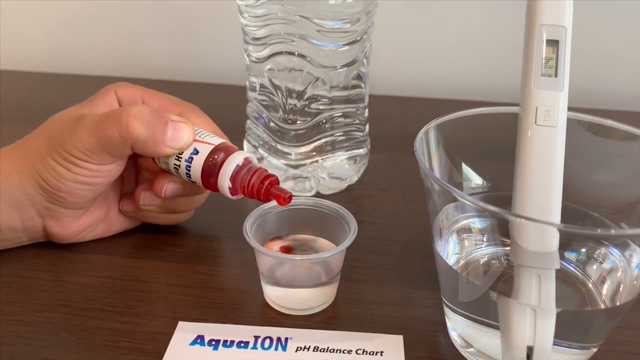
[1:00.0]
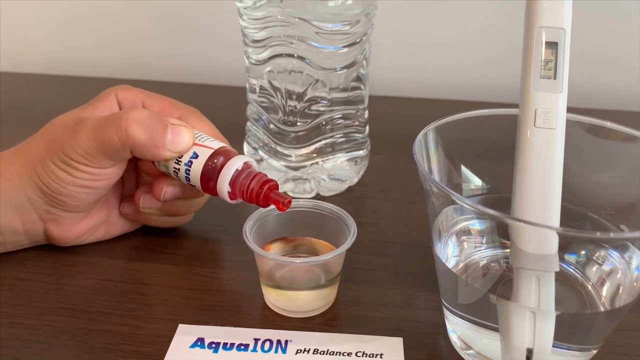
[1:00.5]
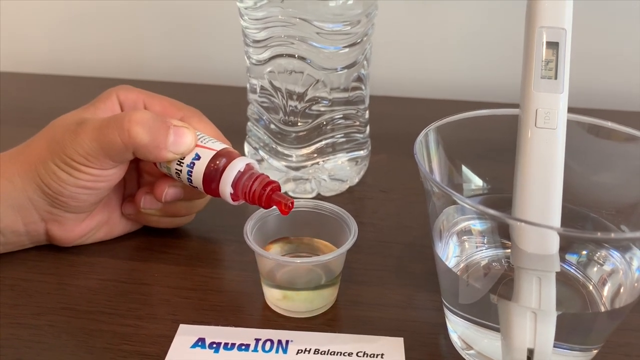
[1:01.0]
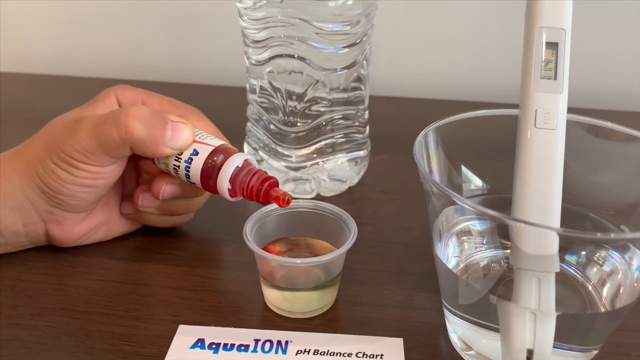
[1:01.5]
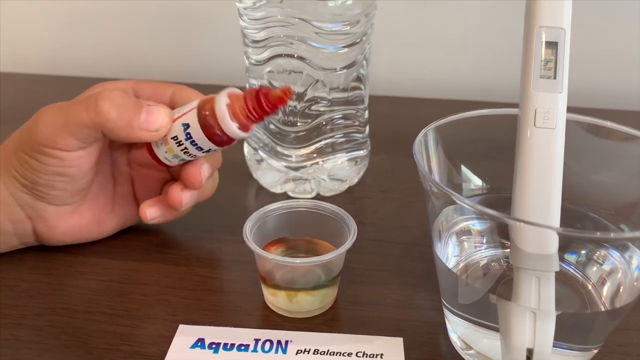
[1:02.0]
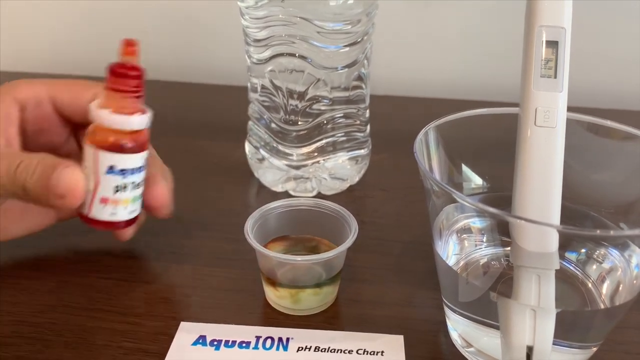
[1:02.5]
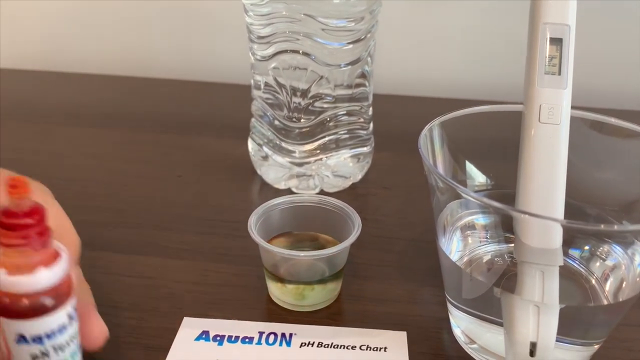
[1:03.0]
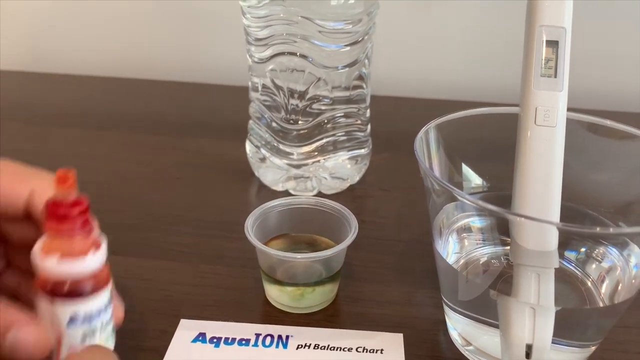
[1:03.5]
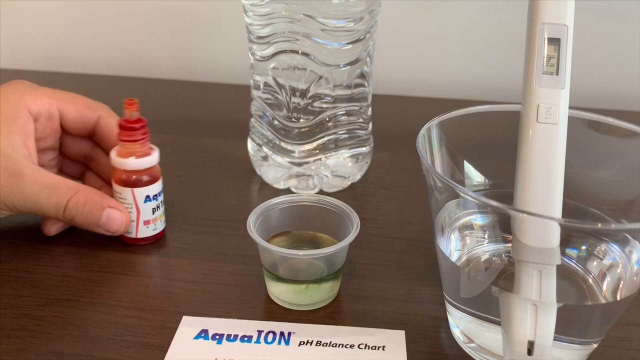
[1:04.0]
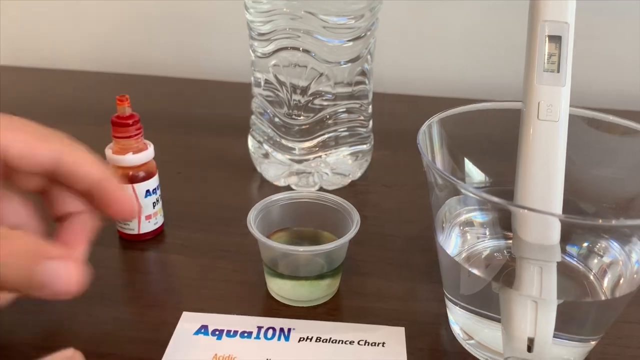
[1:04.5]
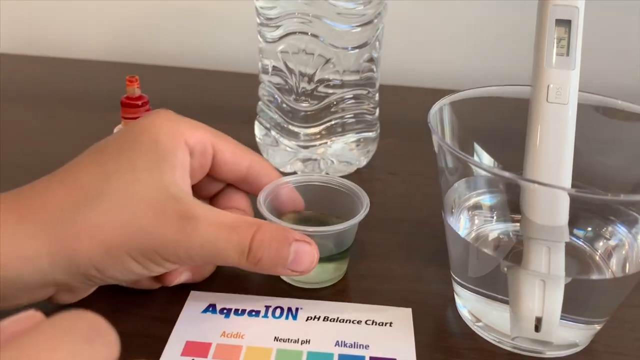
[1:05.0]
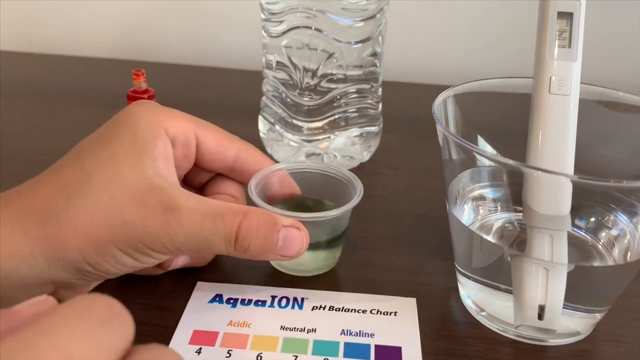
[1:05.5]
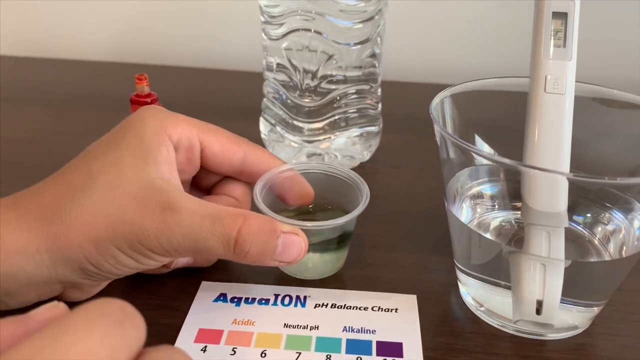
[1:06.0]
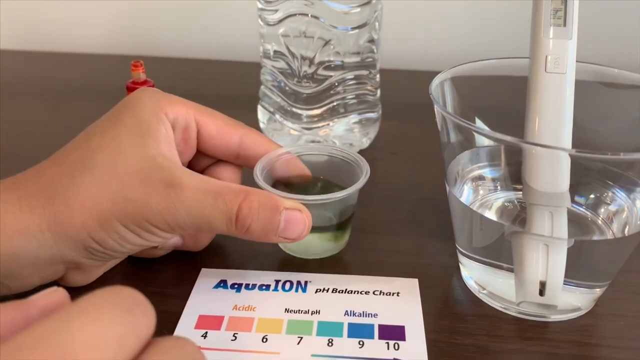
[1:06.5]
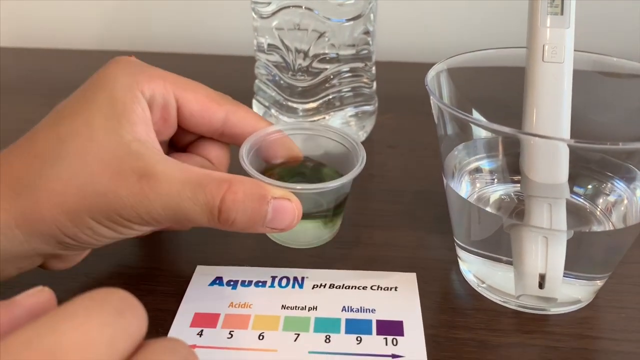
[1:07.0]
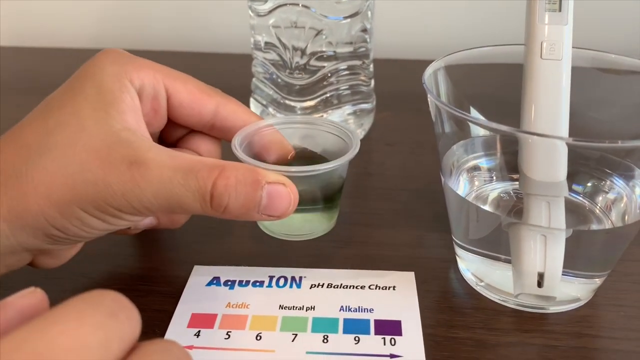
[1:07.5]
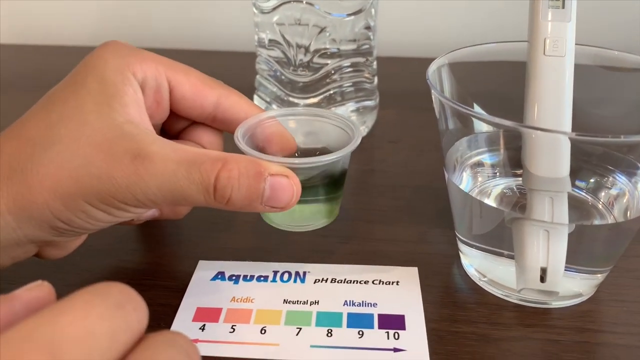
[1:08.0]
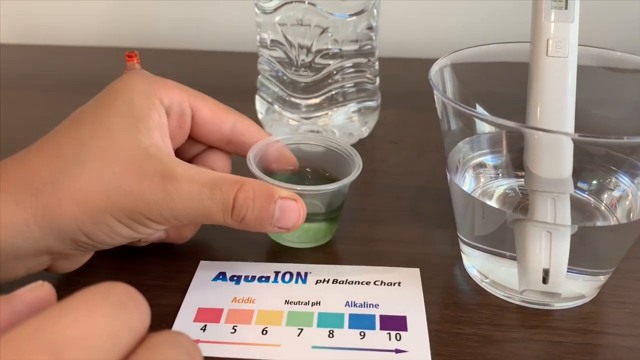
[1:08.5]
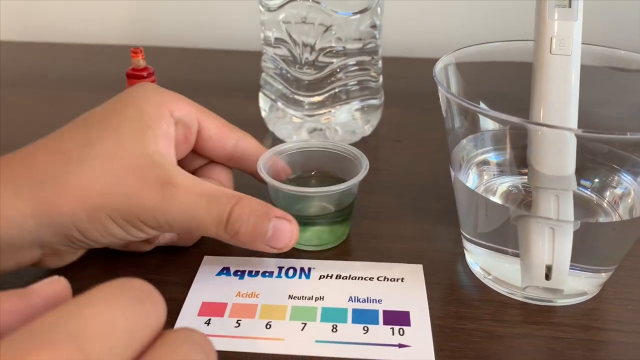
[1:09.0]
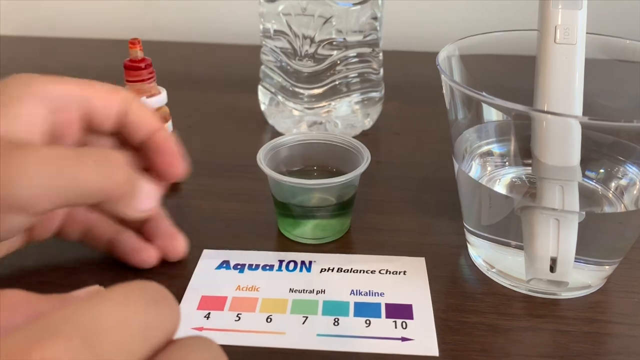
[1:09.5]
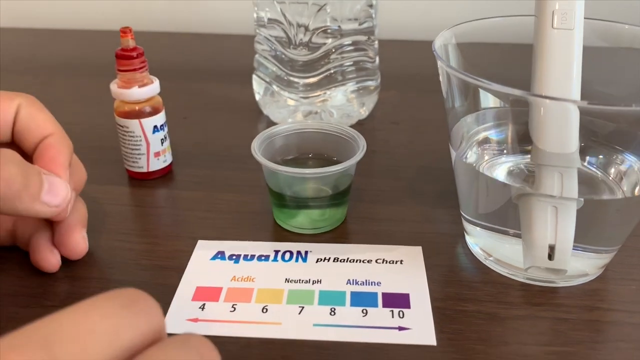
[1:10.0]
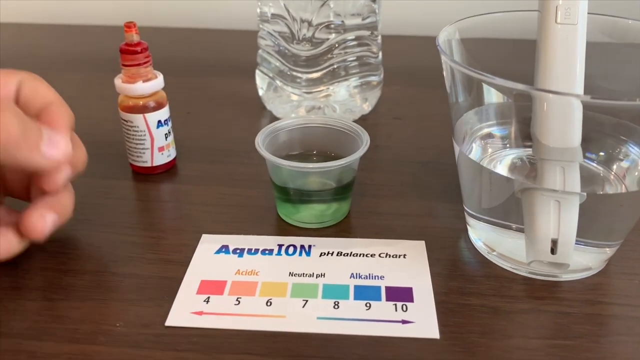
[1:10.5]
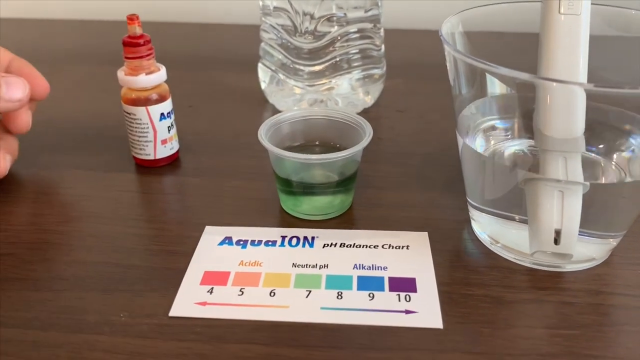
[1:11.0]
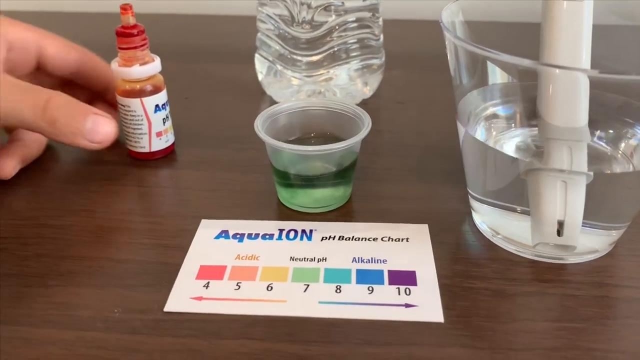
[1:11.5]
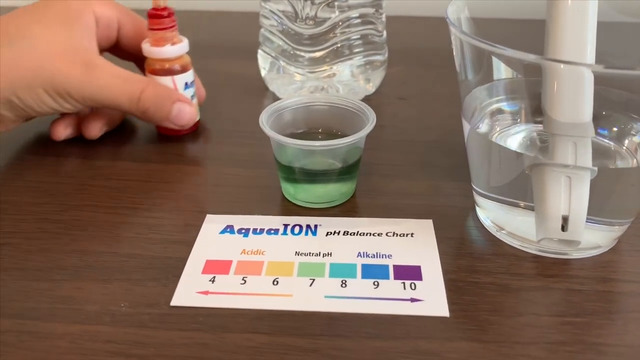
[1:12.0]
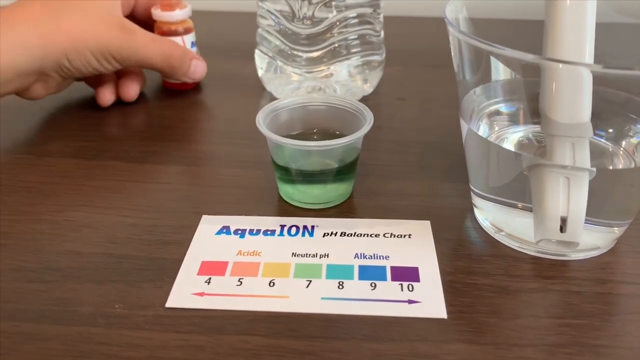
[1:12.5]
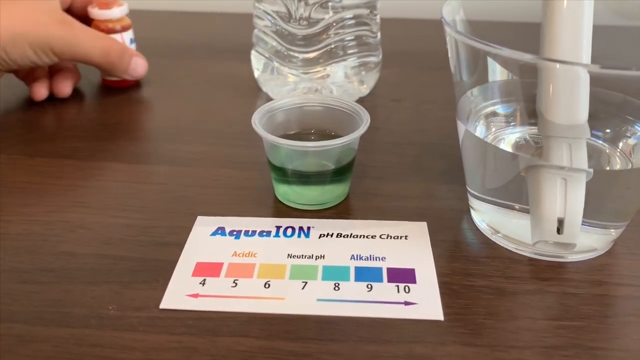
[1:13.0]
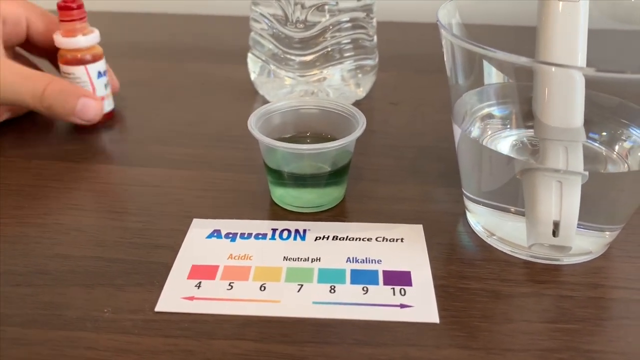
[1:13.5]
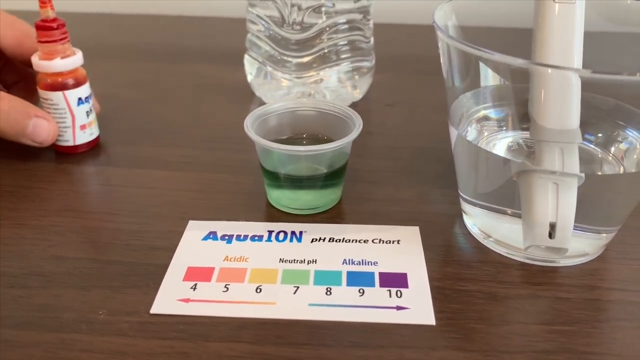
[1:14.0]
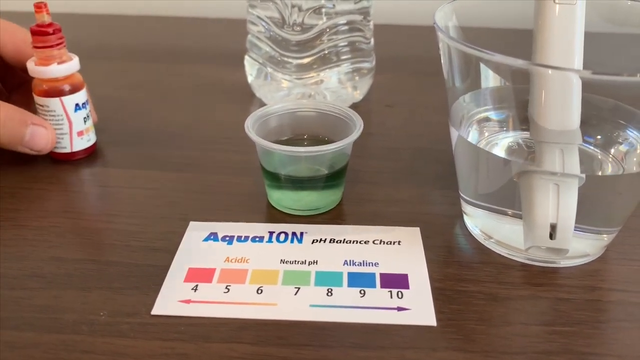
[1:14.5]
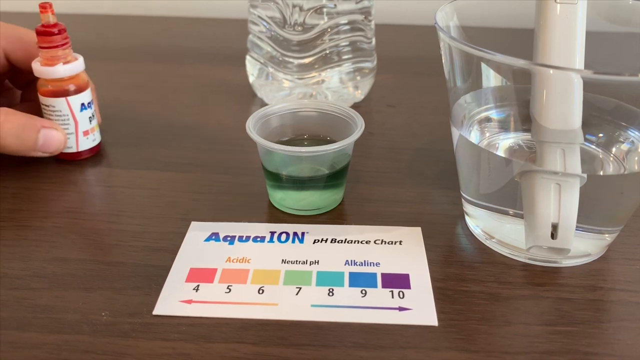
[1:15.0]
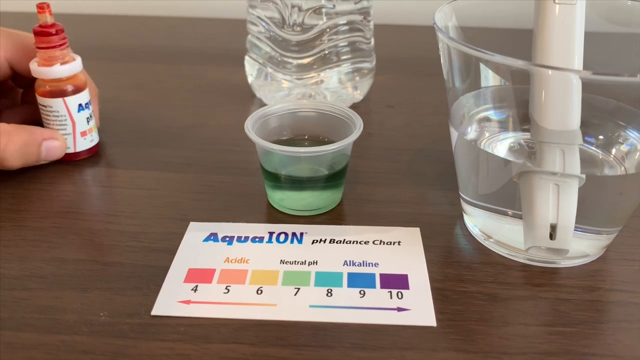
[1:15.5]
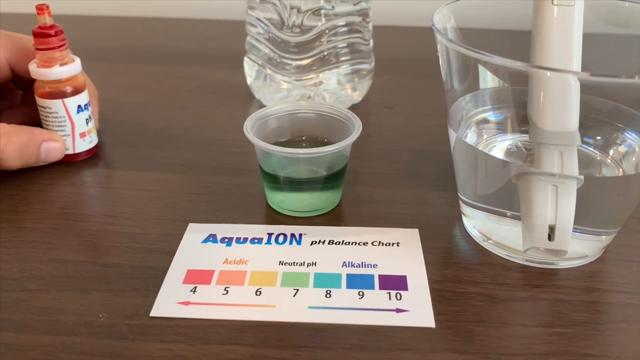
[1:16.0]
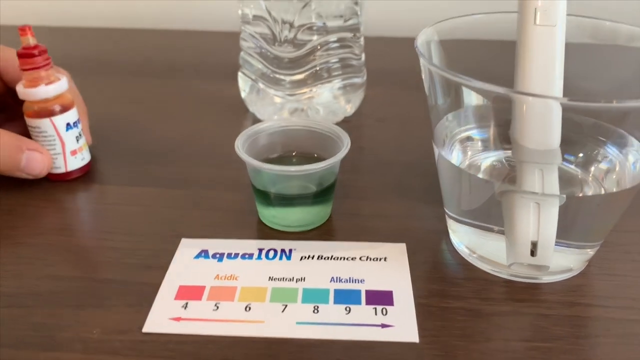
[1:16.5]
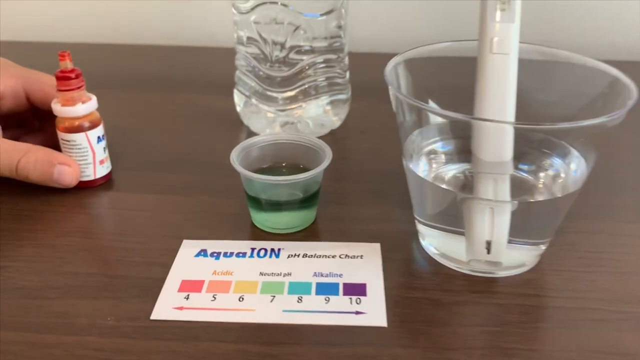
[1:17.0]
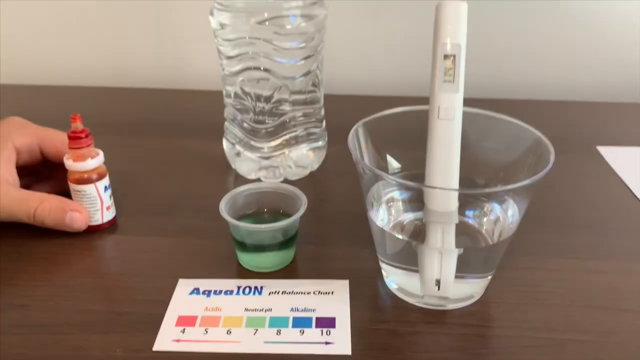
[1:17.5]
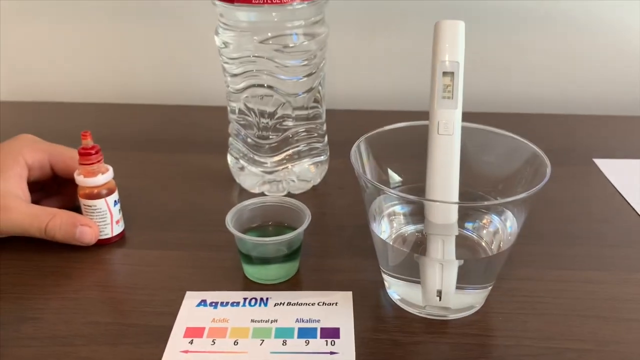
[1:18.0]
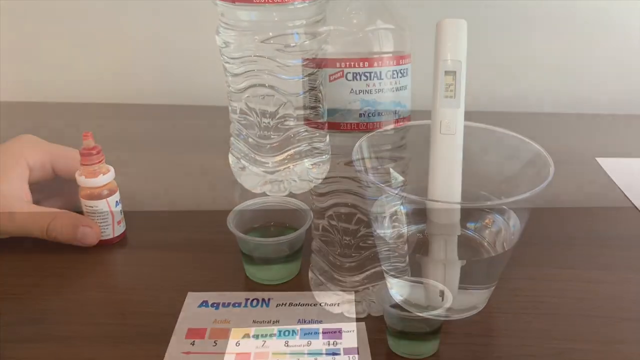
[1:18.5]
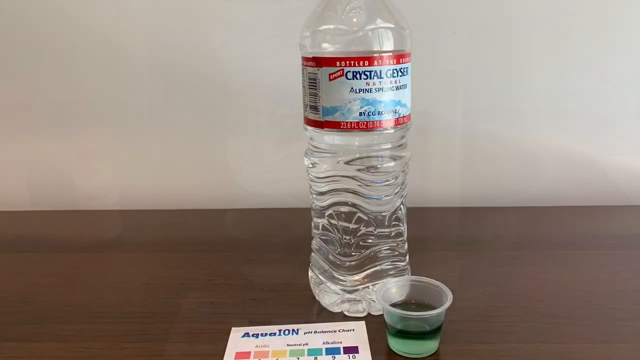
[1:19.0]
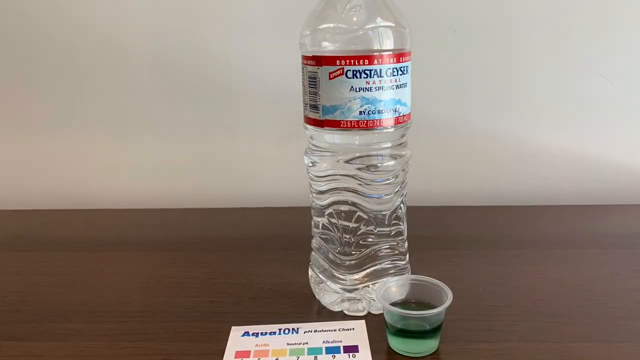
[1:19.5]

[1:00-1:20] The person moves the medicine cup a little to swish the red drops around, and the liquid in it changes from red to light green. In front of the medicine cup is a piece of paper that says "aqua ion pH balance chart", going from 4 to 10, acidic to alkaline. The person holds the red drops again and kind of moves them around on the table. The camera view raises up a little. The aqua ion chart starts at 4 in red, then changes to orange, yellow, green, blue, darker blue, and purple for 10; a value of 7 is green and indicates a neutral pH. The larger plastic glass with the measuring stick remains next to the small plastic cup and the balance chart.